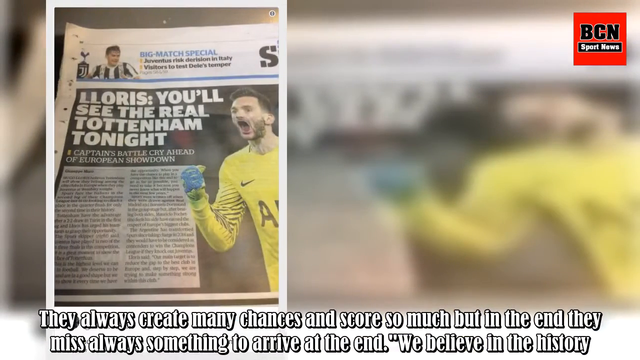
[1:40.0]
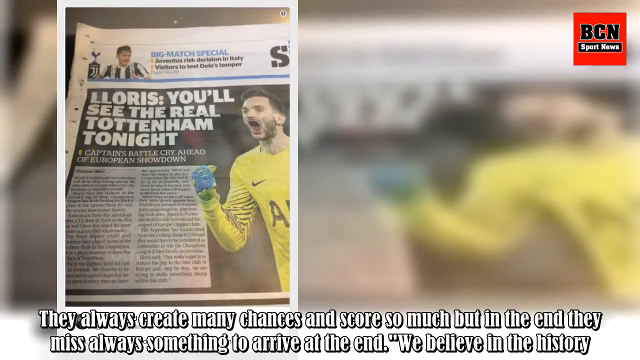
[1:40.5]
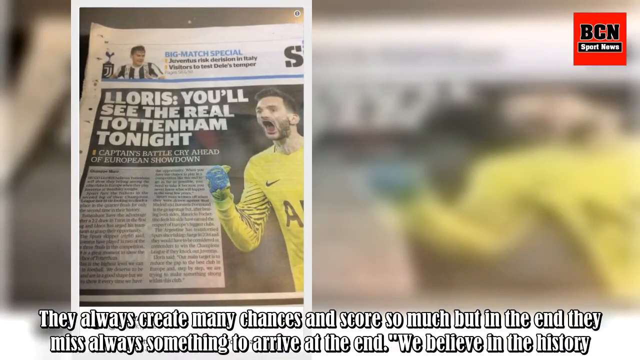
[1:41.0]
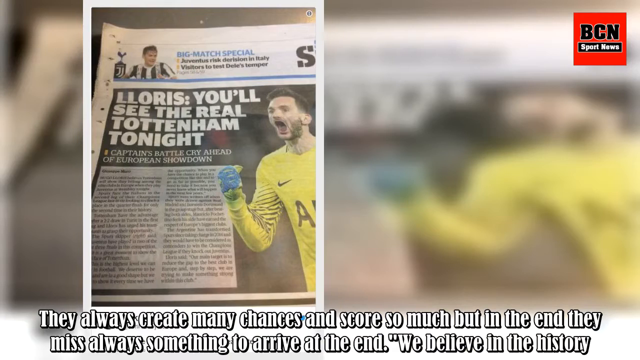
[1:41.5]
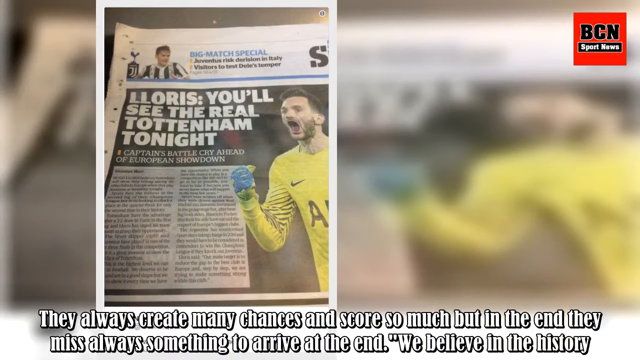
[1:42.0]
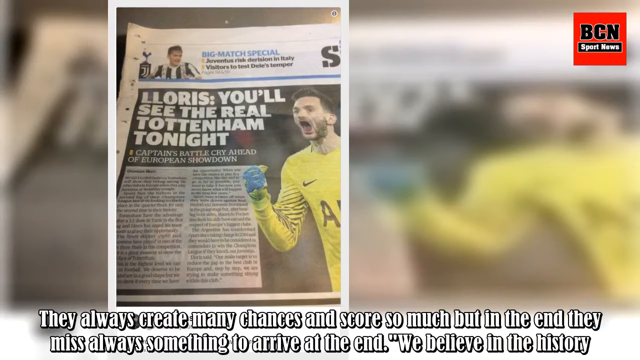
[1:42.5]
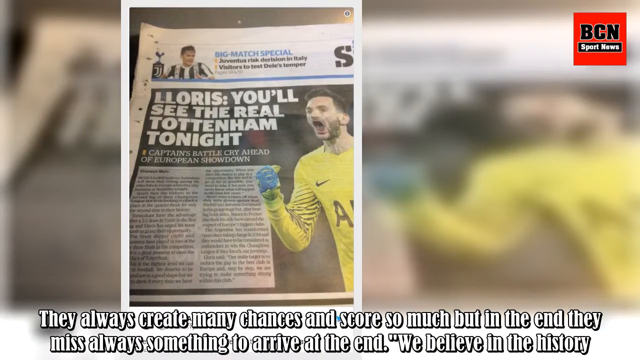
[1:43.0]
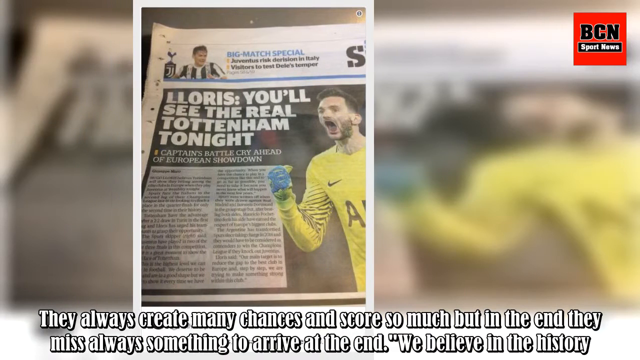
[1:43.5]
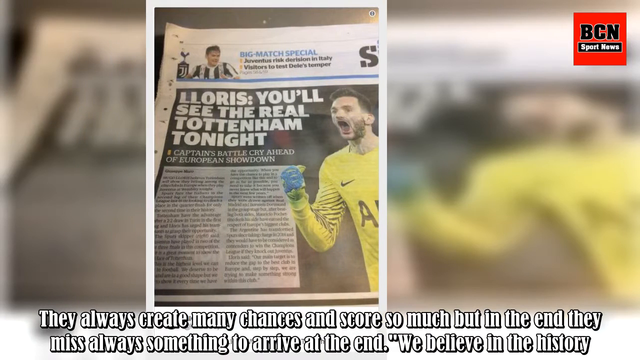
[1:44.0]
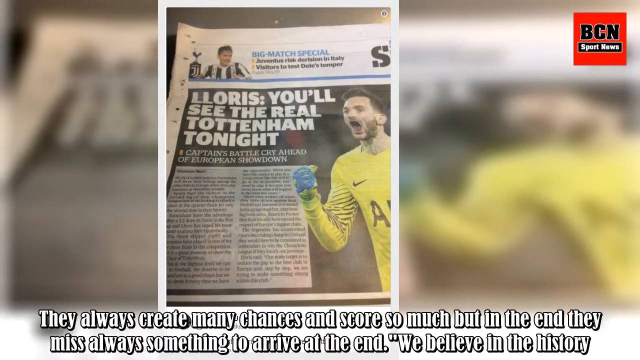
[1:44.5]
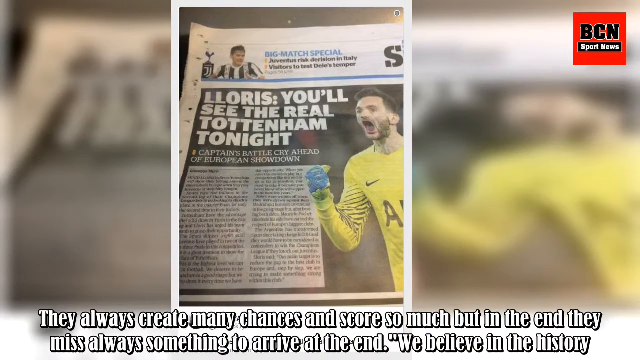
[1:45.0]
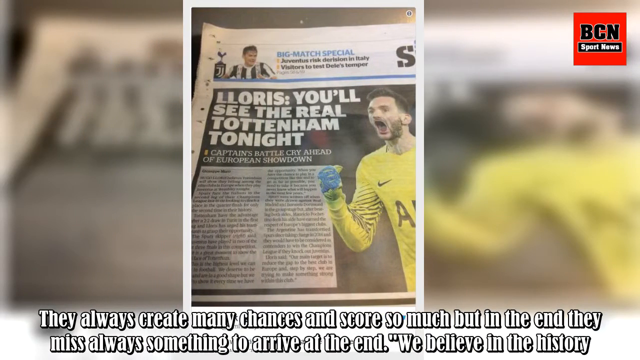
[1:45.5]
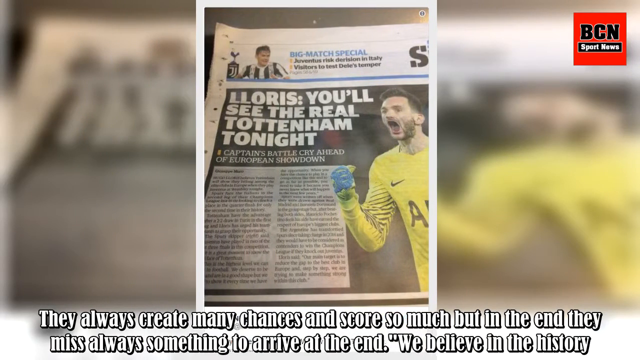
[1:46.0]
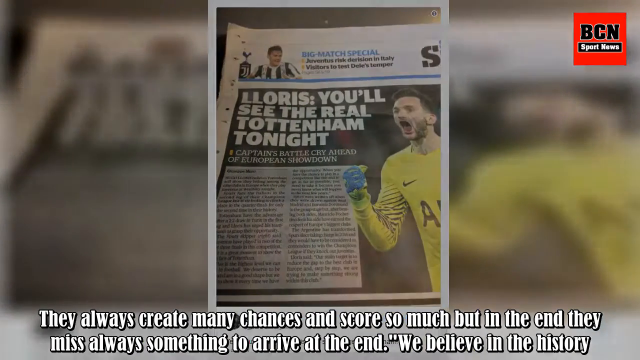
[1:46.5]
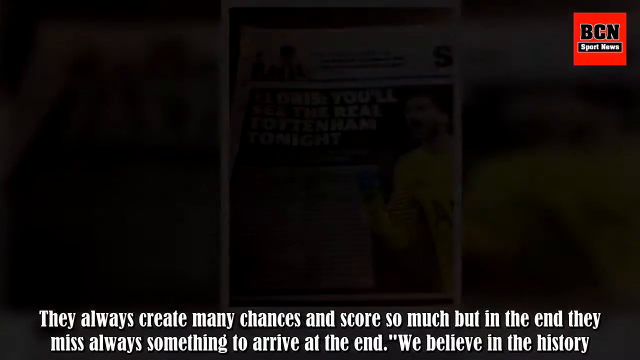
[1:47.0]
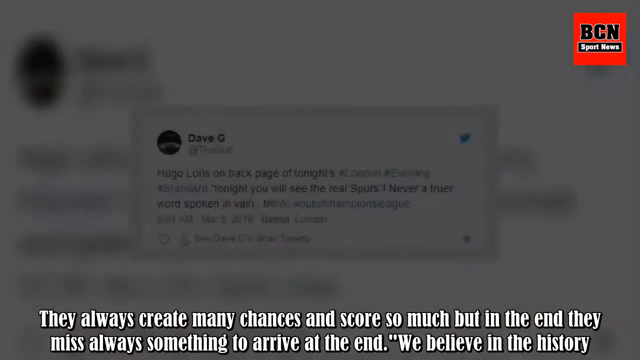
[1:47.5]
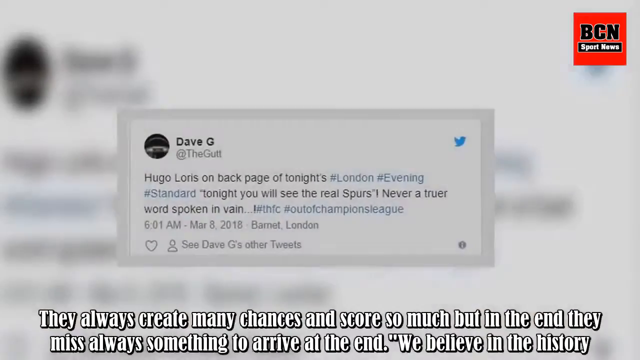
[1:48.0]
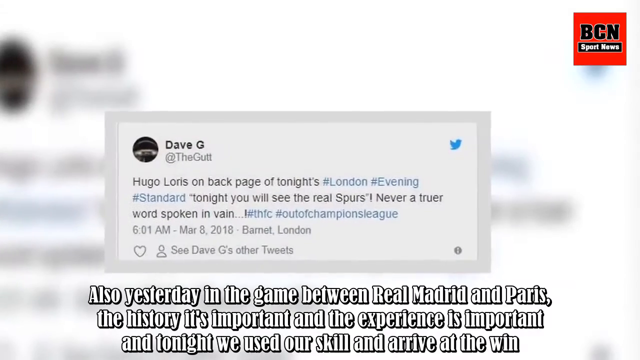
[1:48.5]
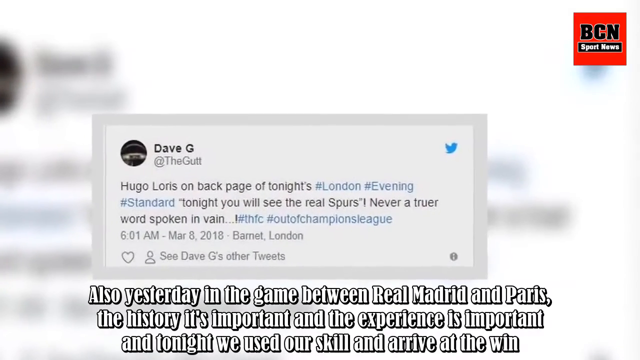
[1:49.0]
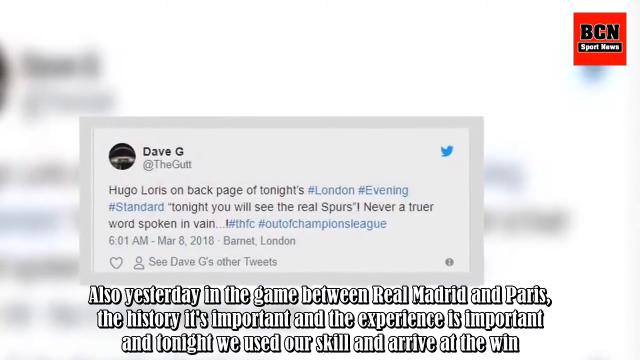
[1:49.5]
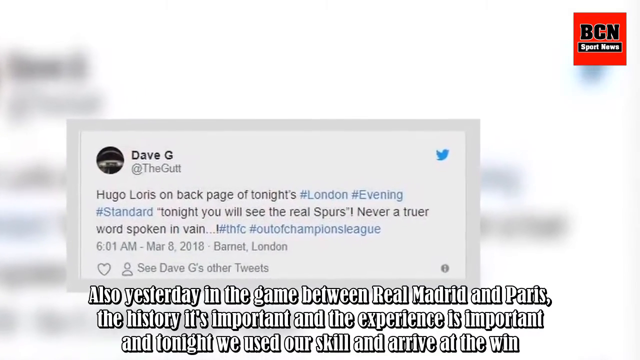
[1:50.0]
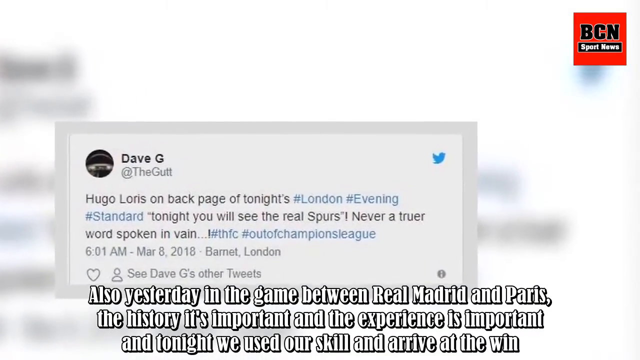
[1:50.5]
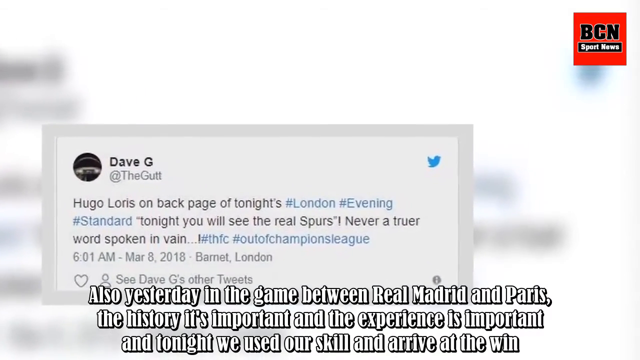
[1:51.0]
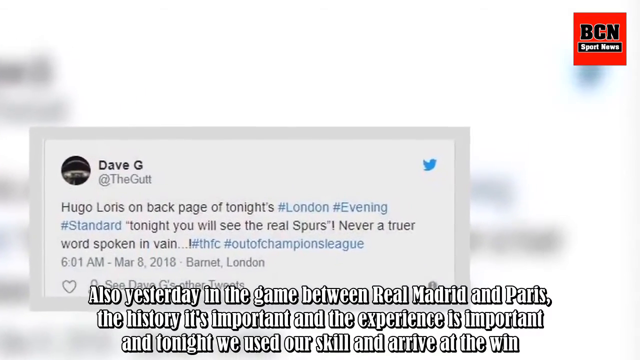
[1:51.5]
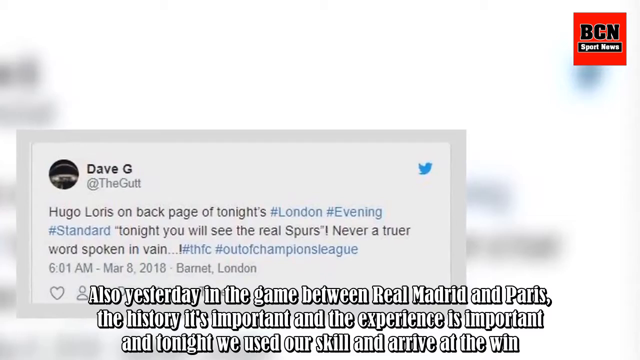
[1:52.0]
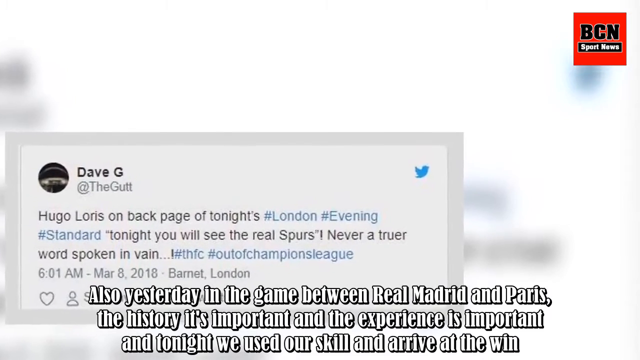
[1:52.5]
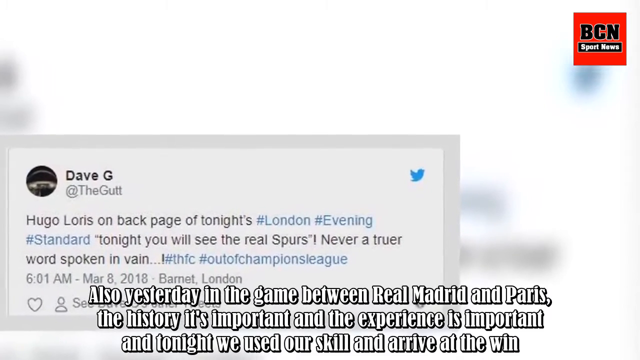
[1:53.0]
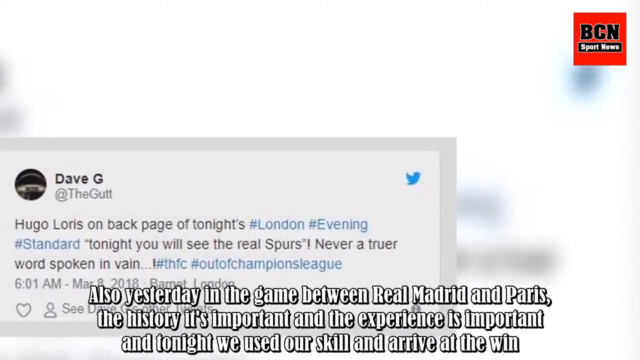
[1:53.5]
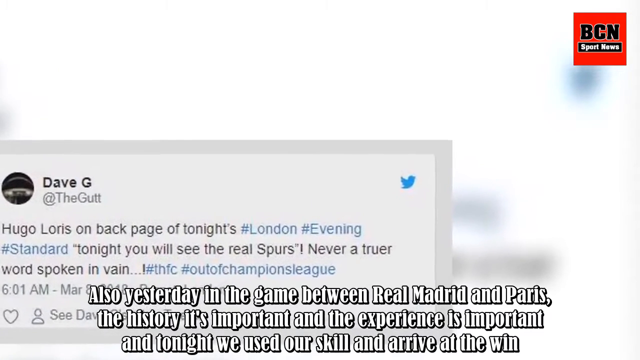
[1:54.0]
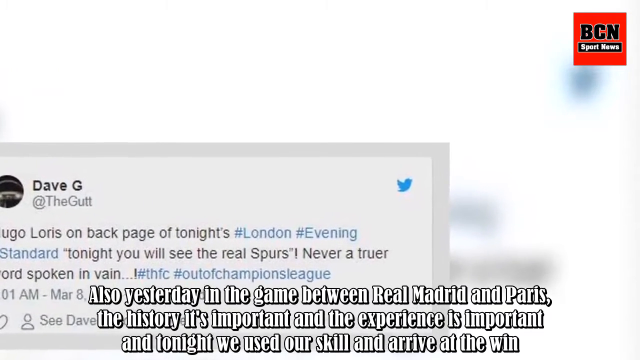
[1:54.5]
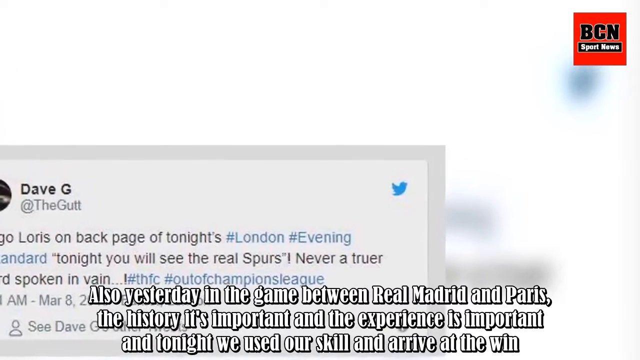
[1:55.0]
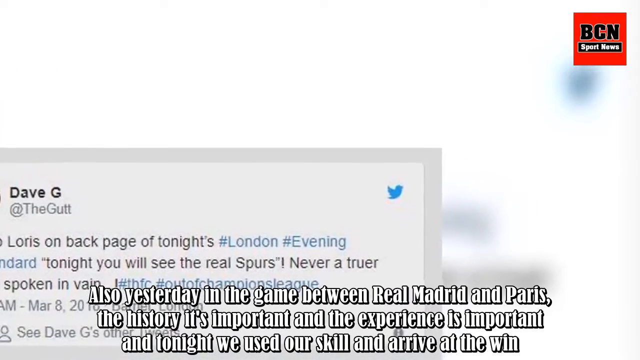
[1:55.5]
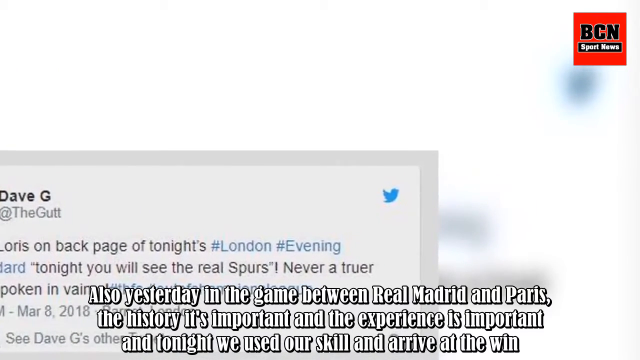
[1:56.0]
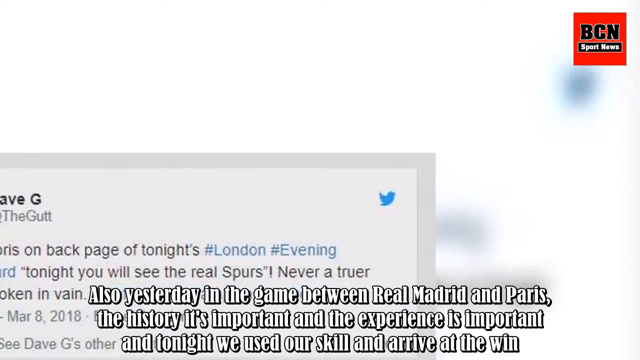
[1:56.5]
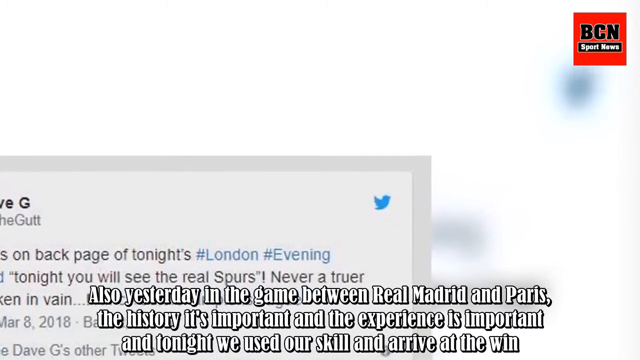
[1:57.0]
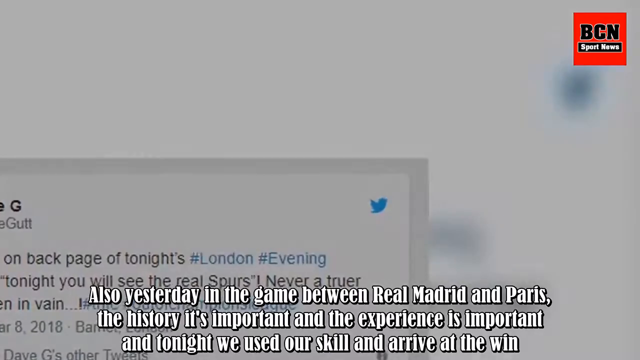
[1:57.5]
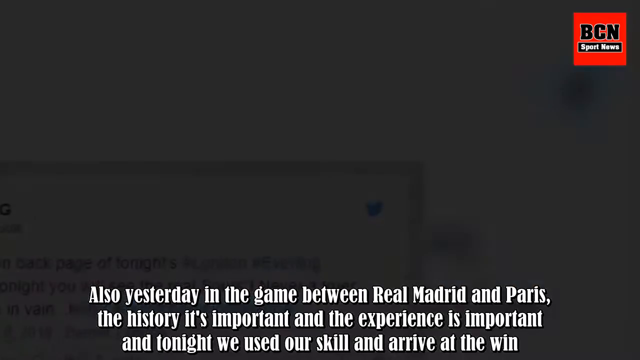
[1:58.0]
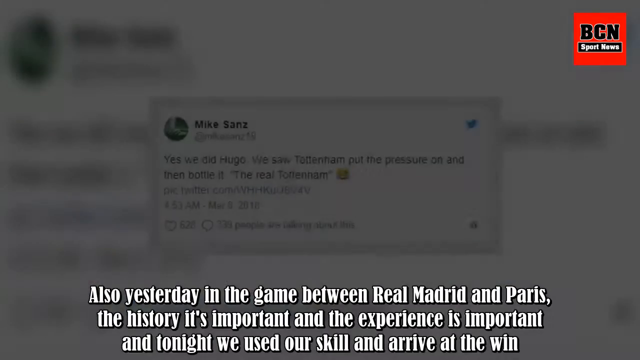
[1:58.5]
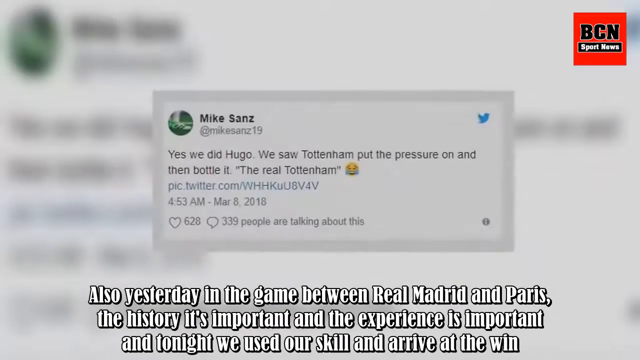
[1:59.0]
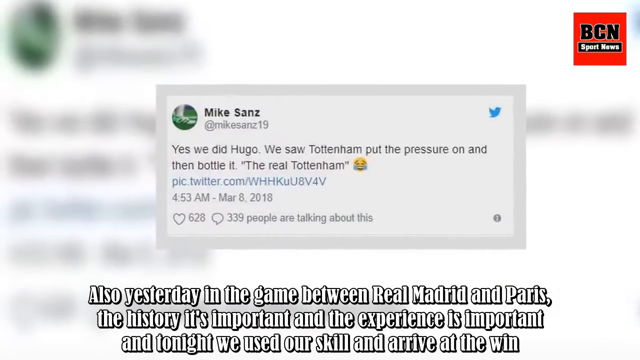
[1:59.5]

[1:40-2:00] The newspaper front page continues moving to the right. It has an image of a goalie wearing a yellow long-sleeved shirt and a blue and yellow glove on the right hand. A tweet by Dave G then appears in the middle, and the captions at the bottom change to read: "Also yesterday in the game between Real Madrid, and Paris, the history, it's important, and the experience is important, and tonight we used our skill and arrived at the win." The Dave G tweet moves slowly toward the bottom left, and another tweet, by Mike Sanz, appears in the center and moves toward the right.